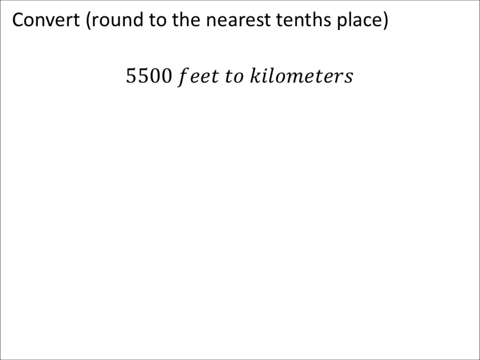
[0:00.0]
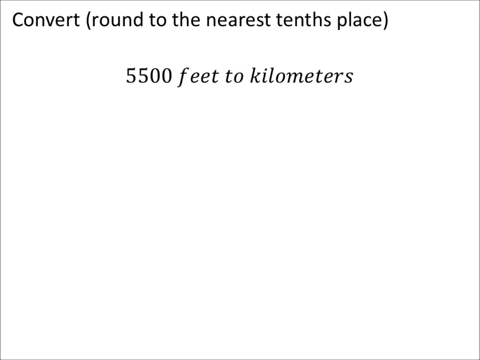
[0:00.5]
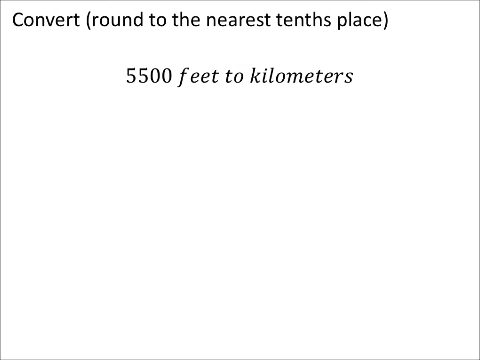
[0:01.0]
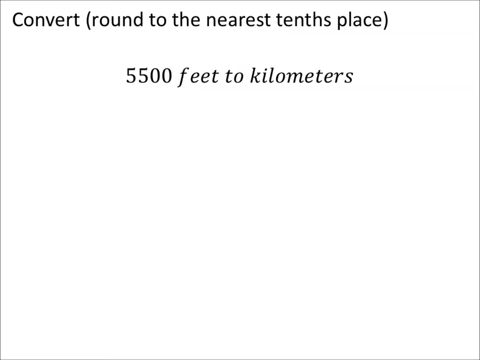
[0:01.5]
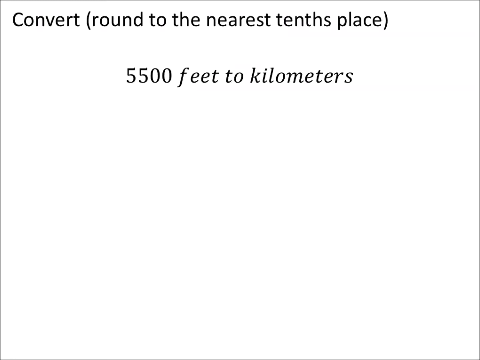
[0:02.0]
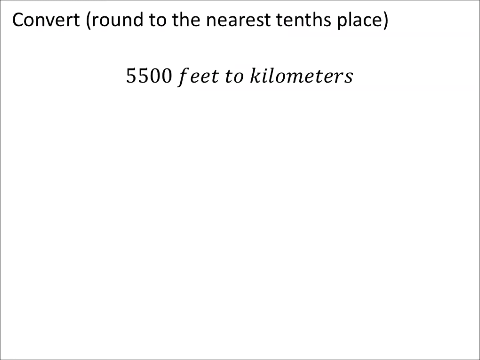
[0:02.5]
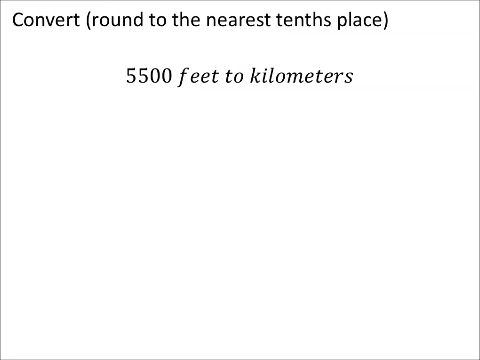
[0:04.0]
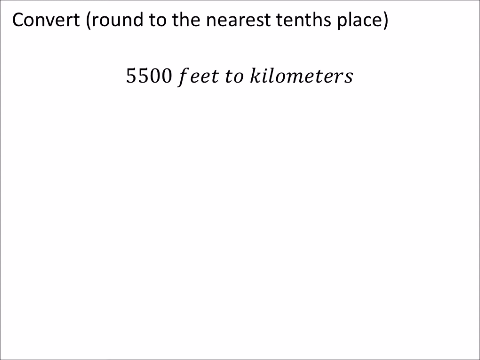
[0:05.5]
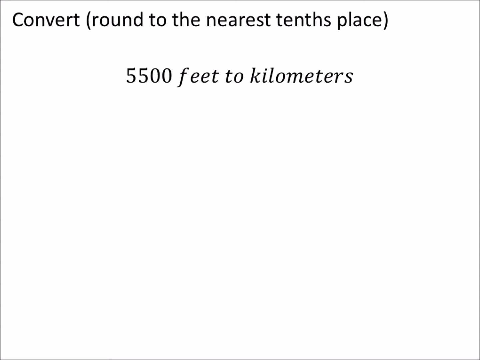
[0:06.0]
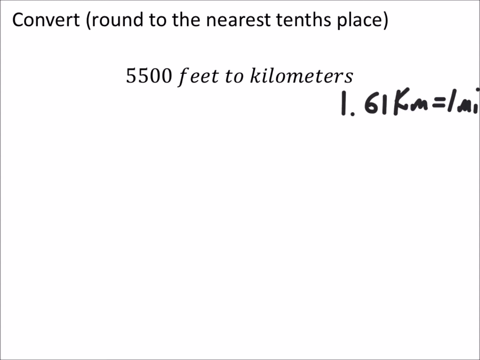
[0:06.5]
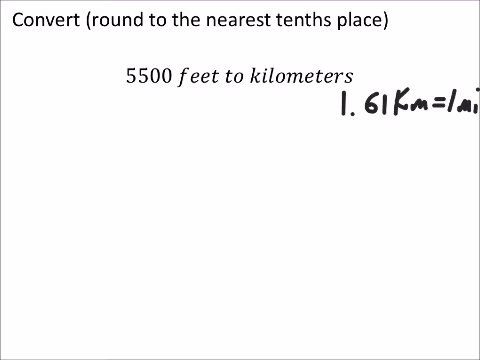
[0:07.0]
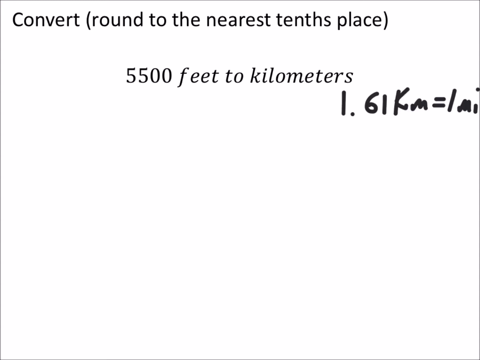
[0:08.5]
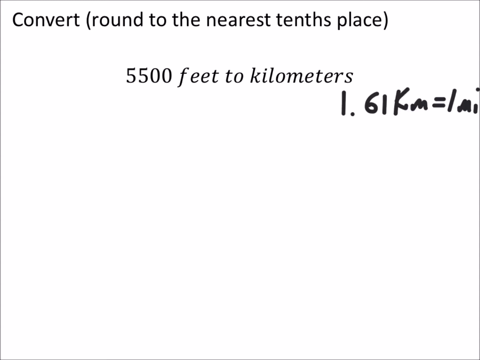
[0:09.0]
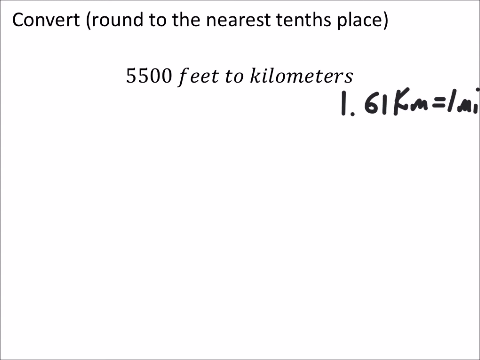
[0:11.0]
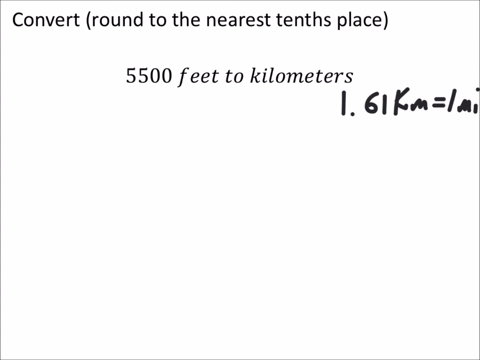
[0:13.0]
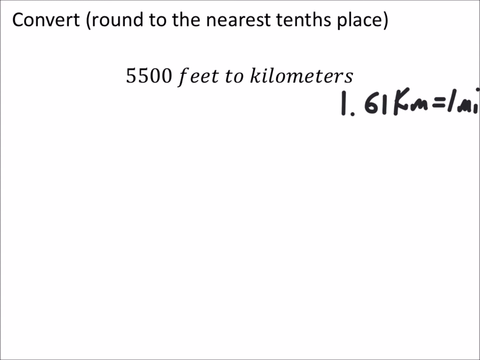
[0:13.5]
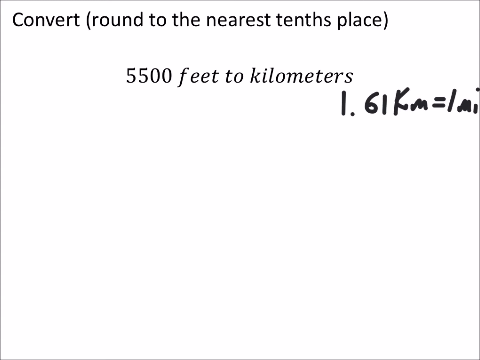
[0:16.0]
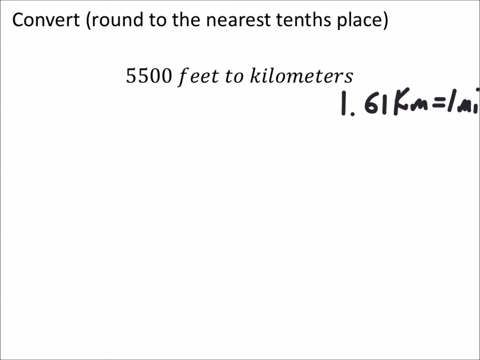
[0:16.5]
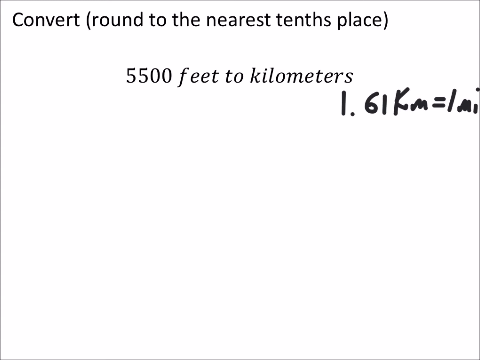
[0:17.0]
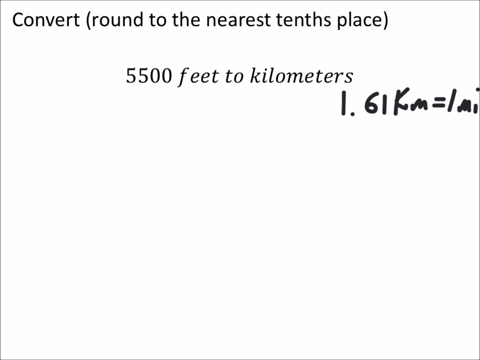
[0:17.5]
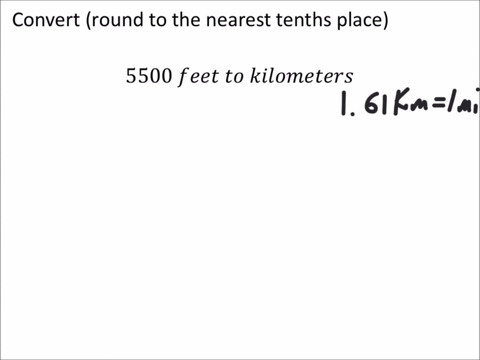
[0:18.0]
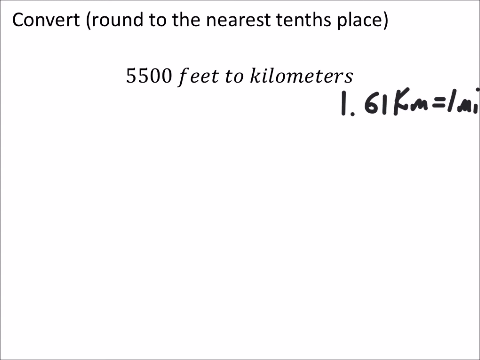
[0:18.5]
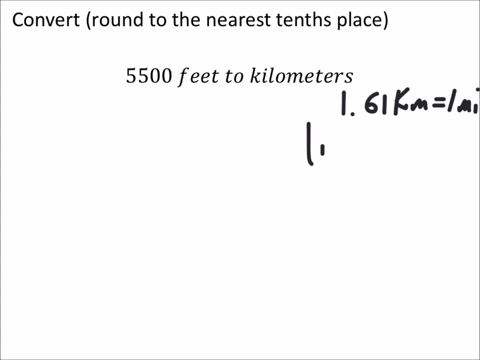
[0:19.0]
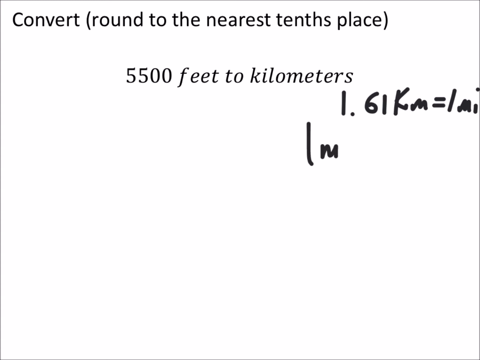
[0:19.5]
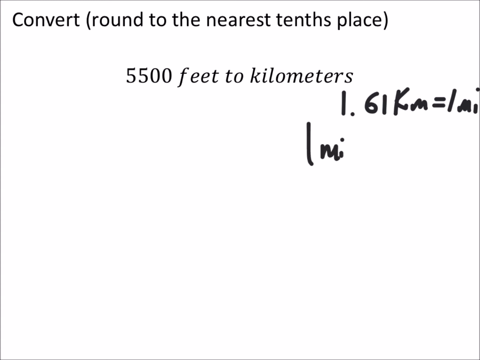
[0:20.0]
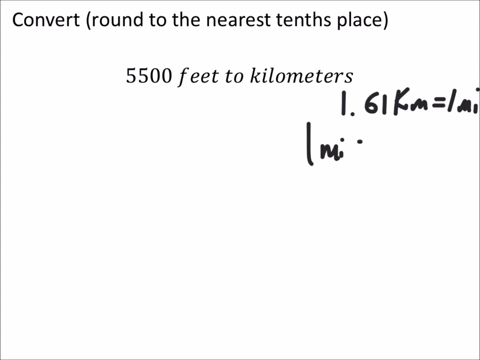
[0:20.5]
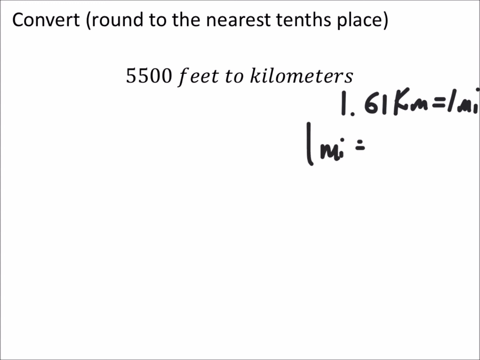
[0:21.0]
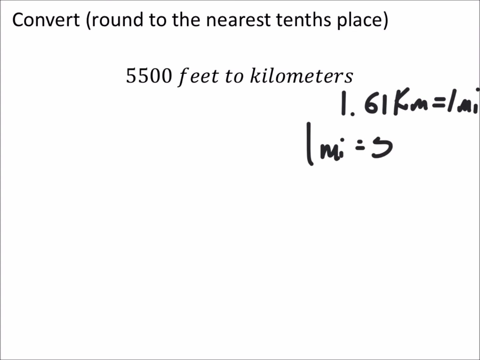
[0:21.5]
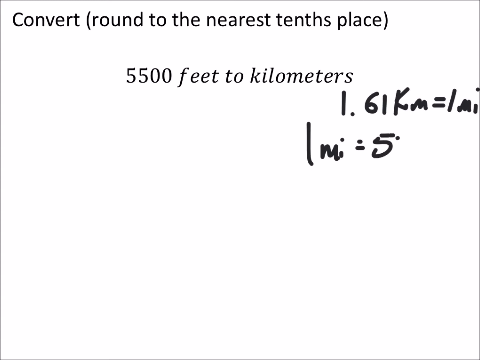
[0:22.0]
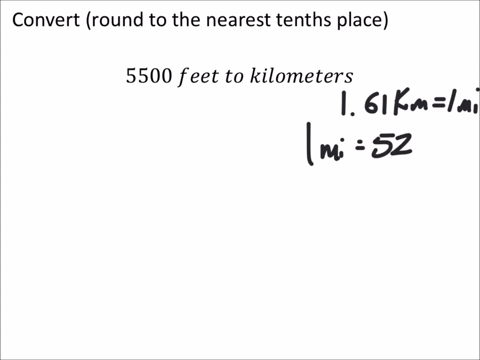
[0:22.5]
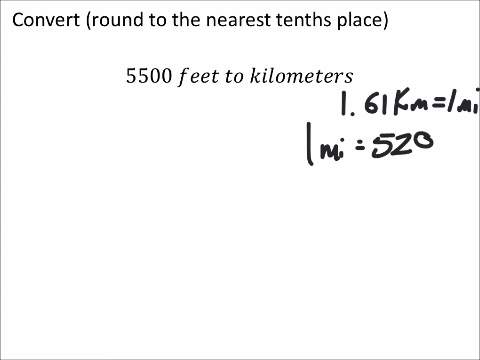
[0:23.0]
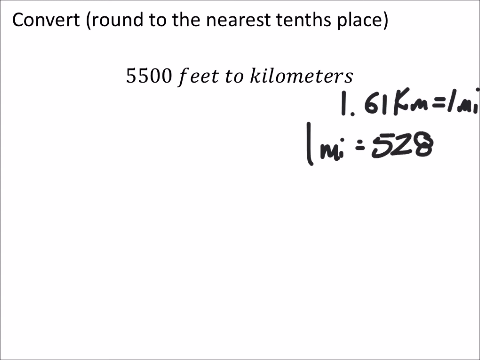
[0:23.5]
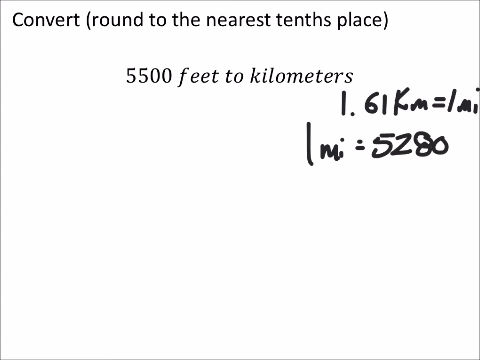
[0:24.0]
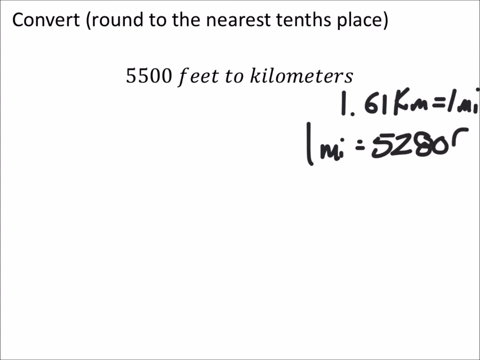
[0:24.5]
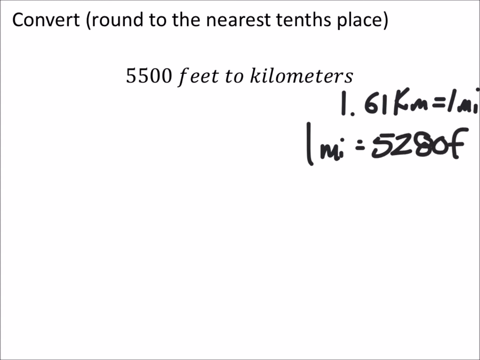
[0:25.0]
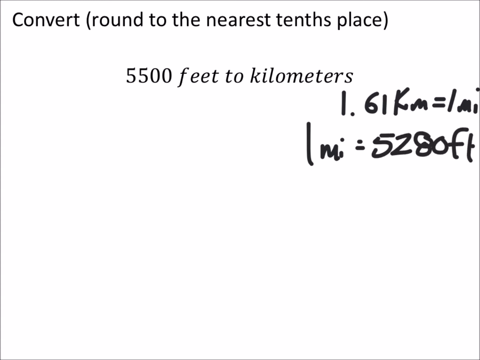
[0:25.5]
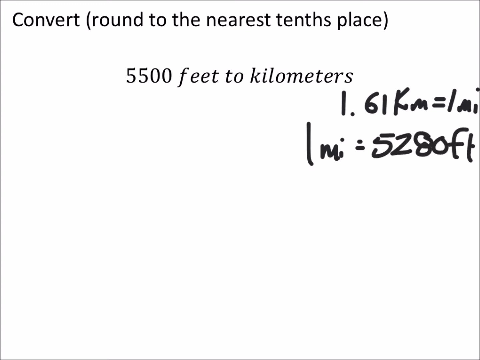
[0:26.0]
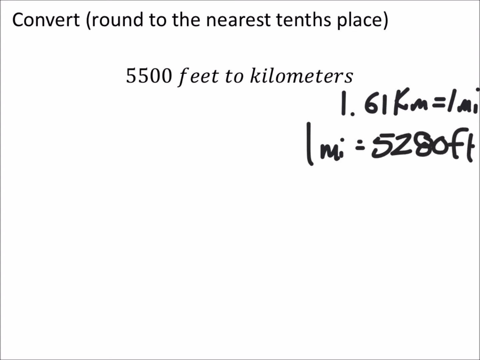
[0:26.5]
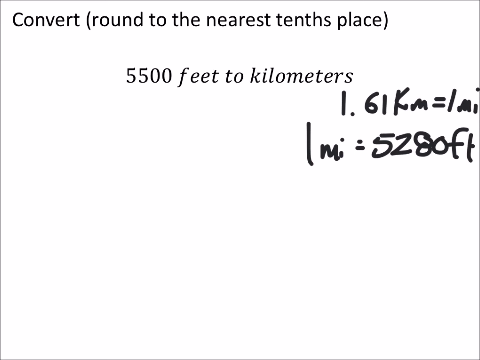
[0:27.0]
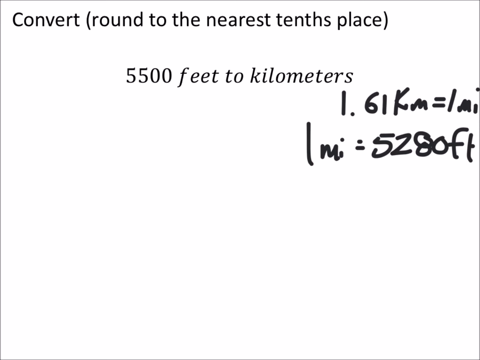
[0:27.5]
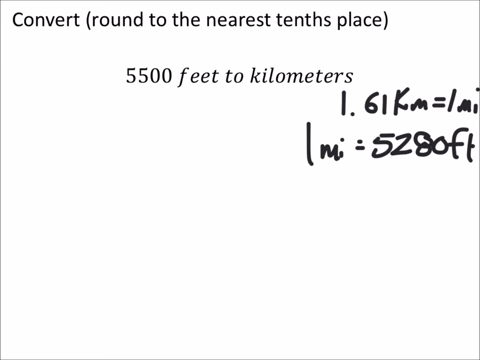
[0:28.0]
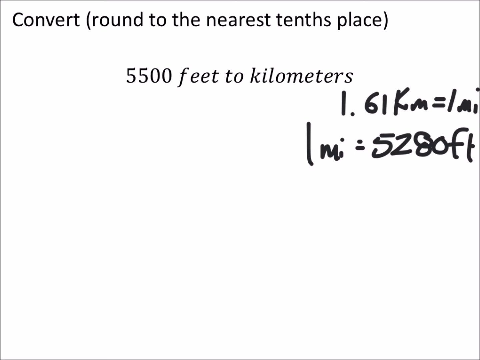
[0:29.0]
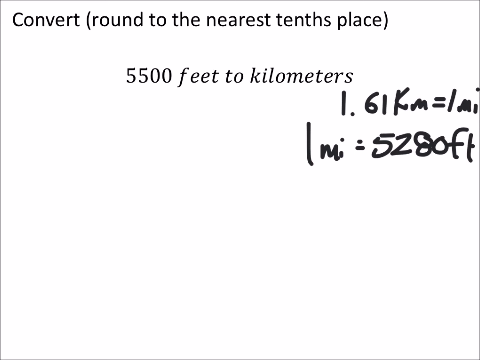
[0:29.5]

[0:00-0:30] The video presents a problem converting 5,500 feet to kilometers. A formula is shown stating that 1.61 kilometers equals 1 millimeter, followed by 1 millimeter divided by 5,280 feet. The formula used here is not yet clear.